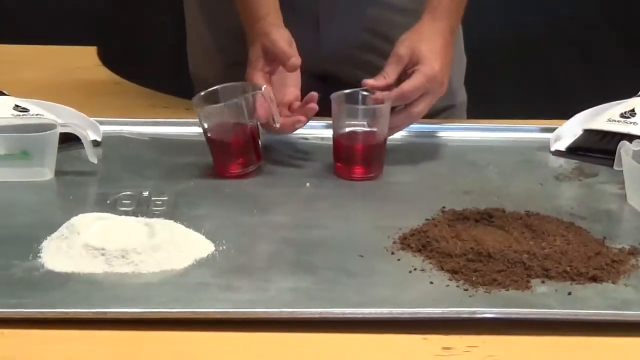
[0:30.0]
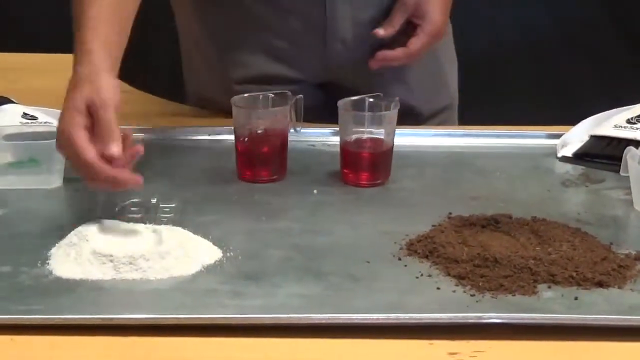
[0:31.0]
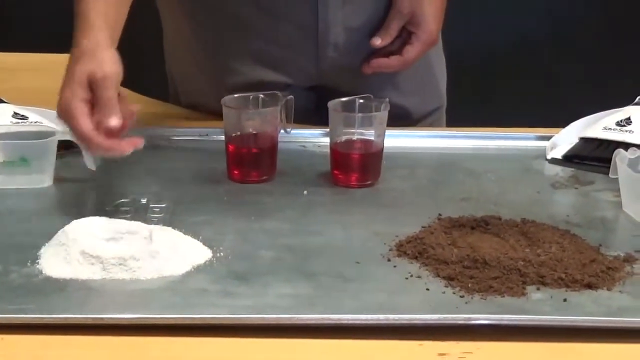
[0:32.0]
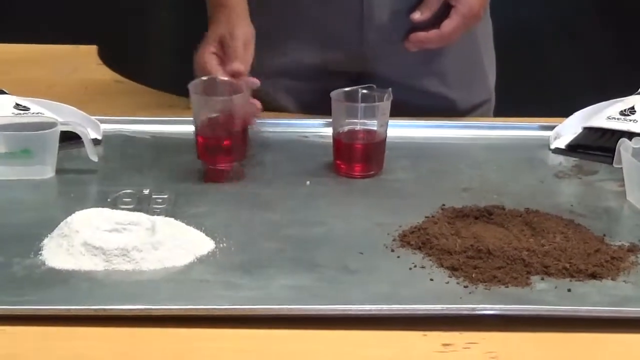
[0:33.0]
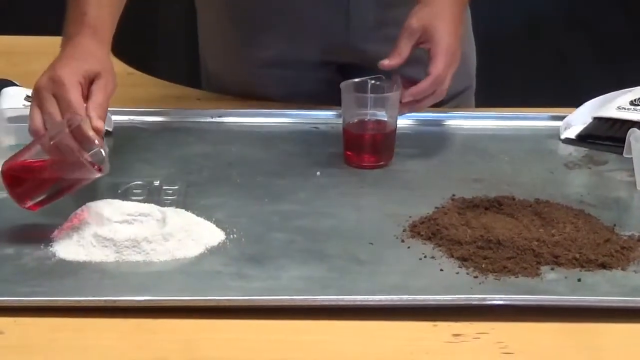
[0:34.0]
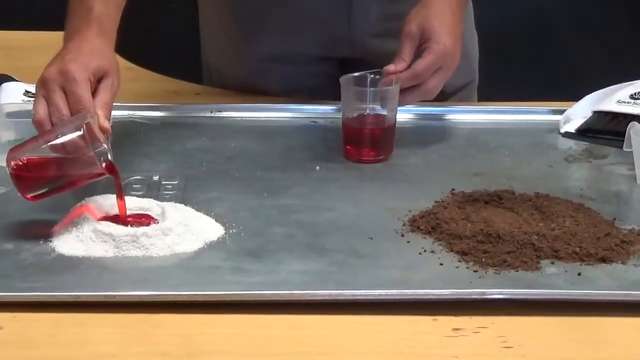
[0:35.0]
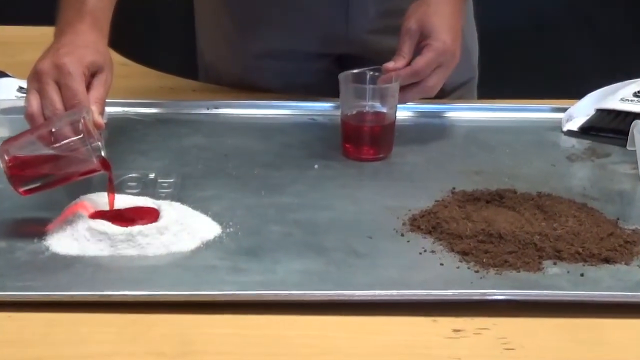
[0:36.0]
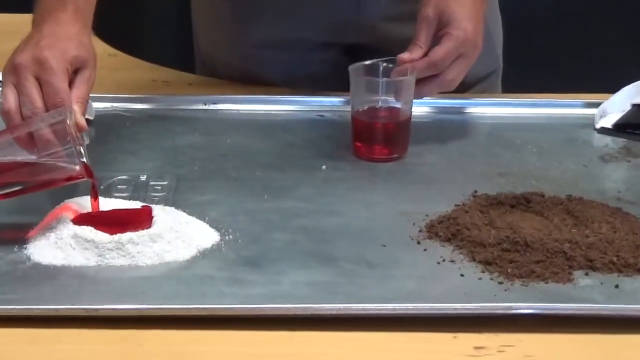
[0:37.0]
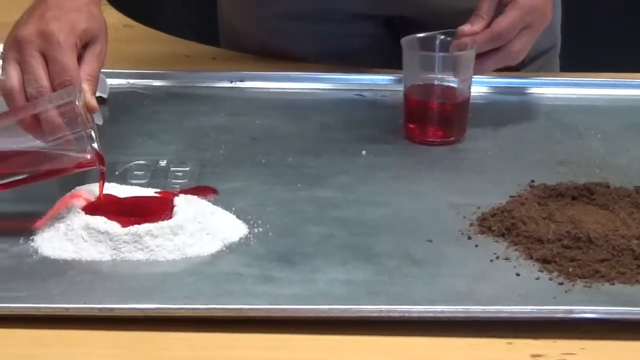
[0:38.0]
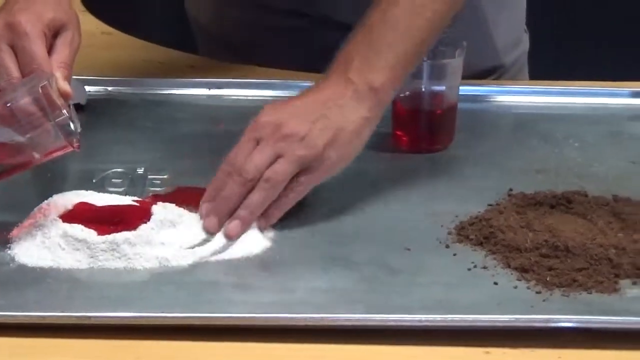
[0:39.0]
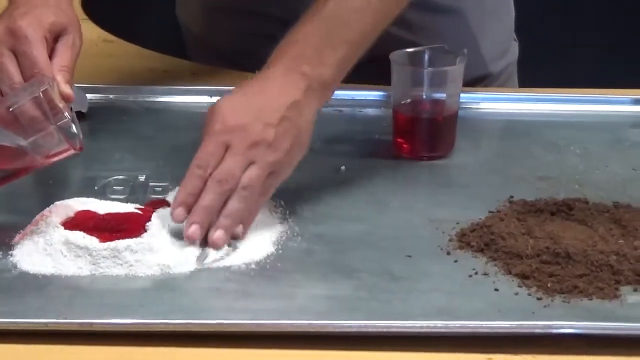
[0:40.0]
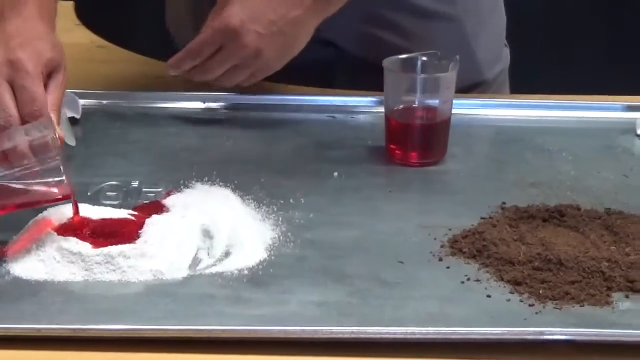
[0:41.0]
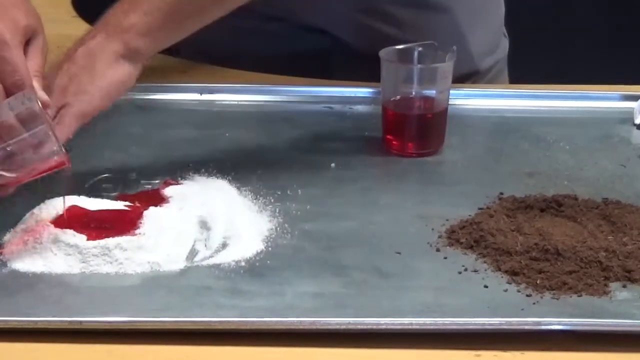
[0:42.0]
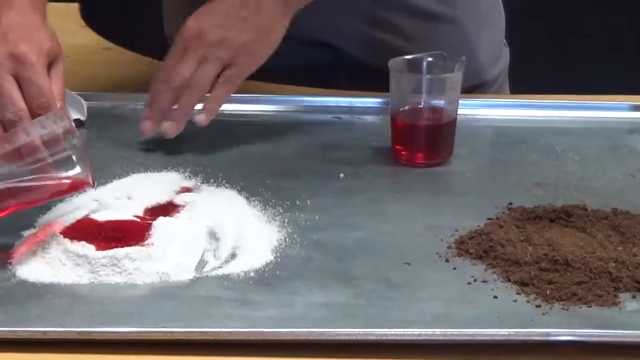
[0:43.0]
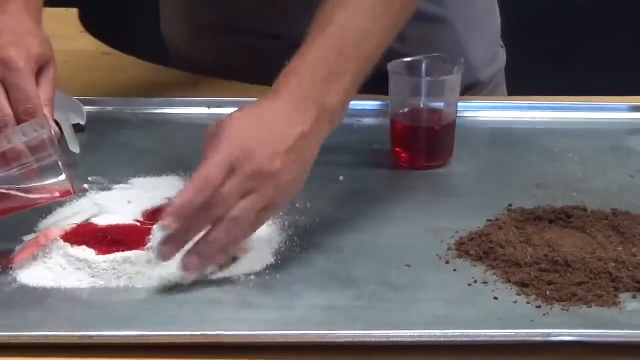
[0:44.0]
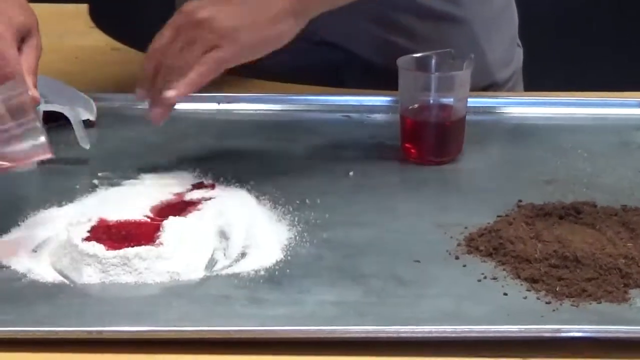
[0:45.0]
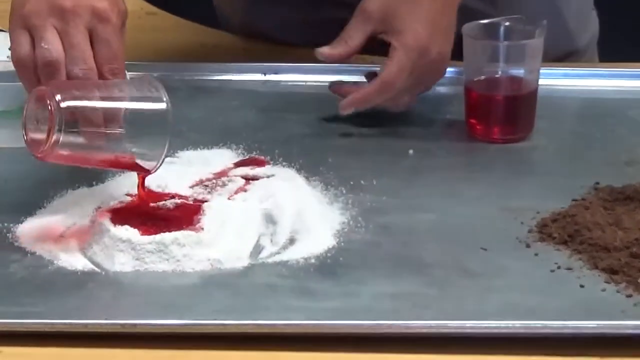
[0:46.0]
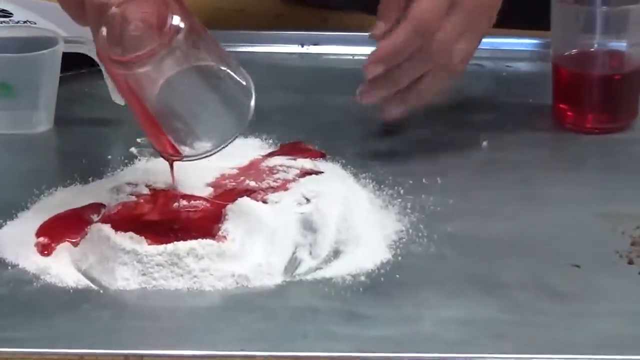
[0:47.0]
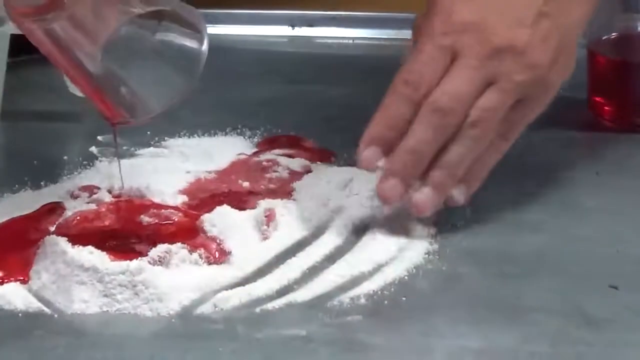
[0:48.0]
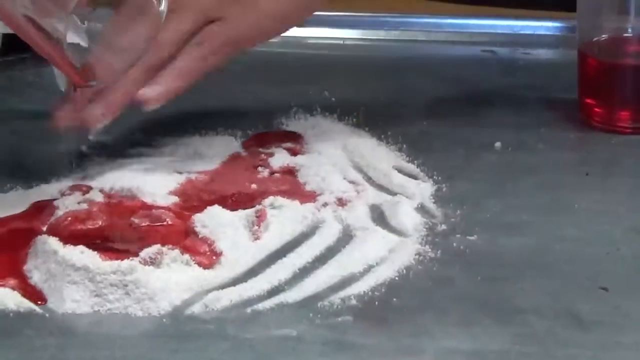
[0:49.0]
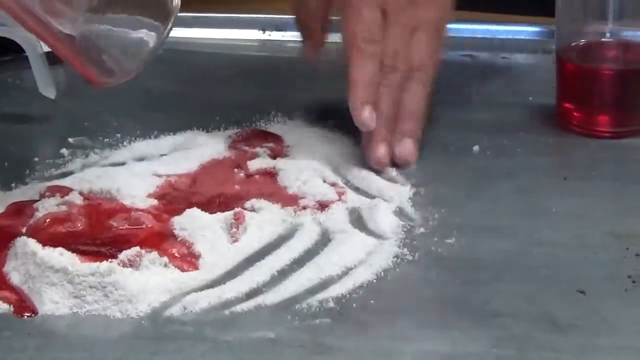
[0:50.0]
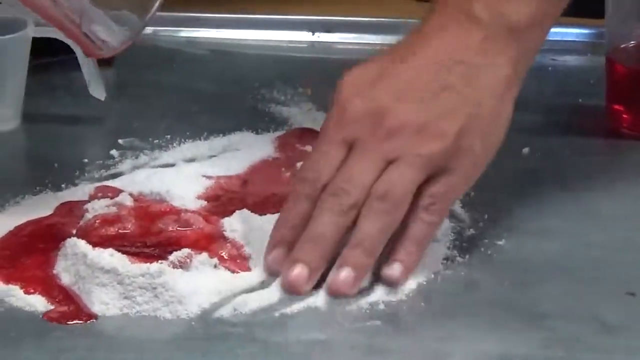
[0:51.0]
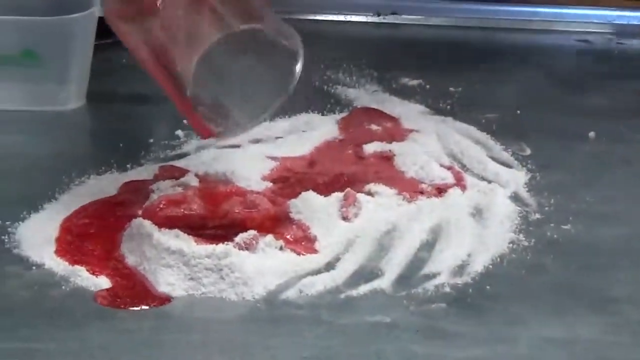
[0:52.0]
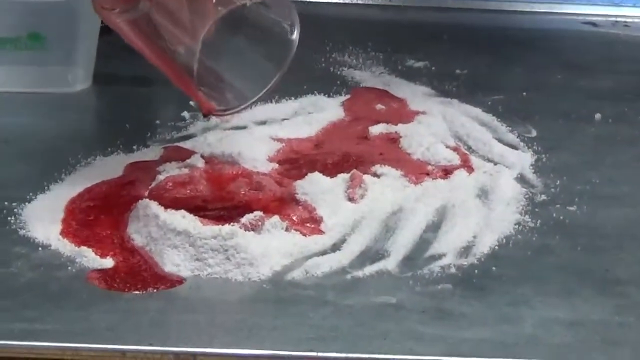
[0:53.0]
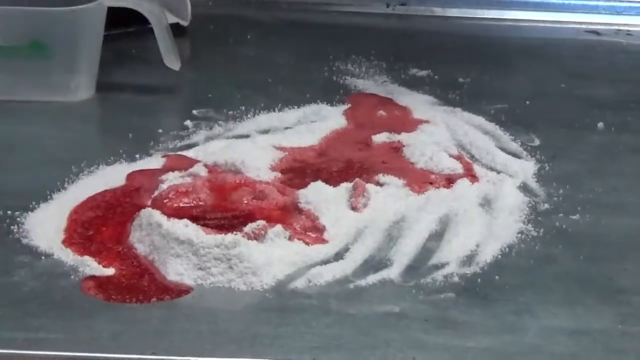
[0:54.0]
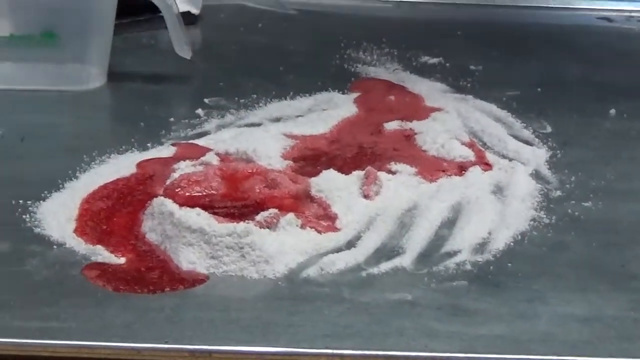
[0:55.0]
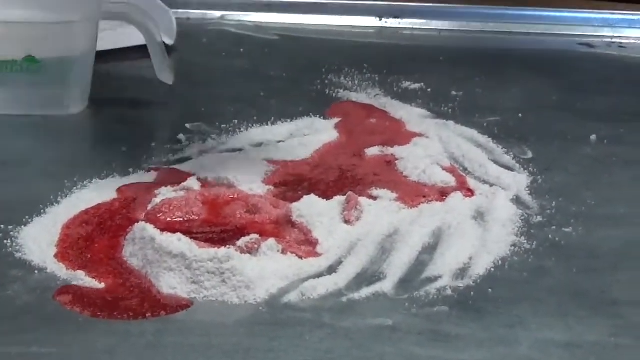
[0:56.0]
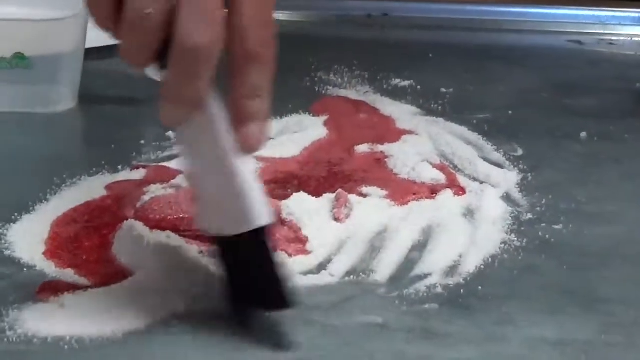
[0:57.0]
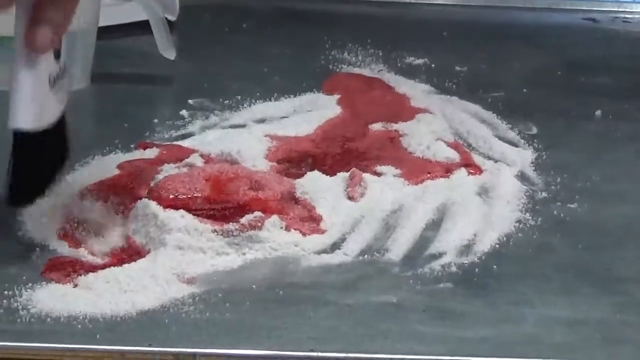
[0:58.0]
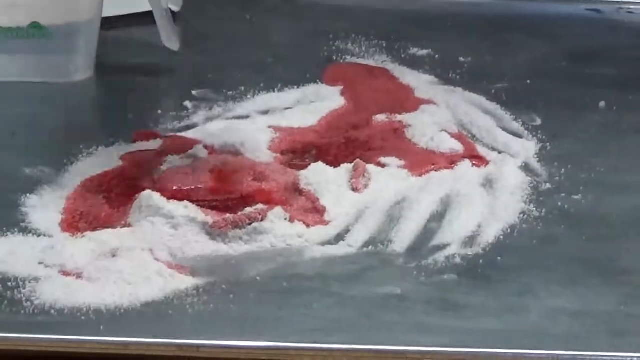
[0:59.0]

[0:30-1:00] The man picks up the liquid and is about to pour, but puts it down again and pats the absorbent products well. He creates a space like a crater in the middle of the products so the liquid does not spill over when he pours it. He pats the left product again and pours the red liquid into the crater he created. The liquid still spills onto other parts of the table, so the man takes some of the product on the left to create a barrier so the liquid does not spill further. The liquid is absorbed by the product, which starts looking dry. He uses his hand and a brush to make sure it covers the area.